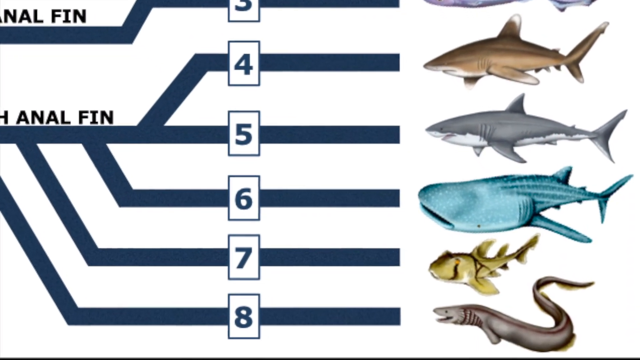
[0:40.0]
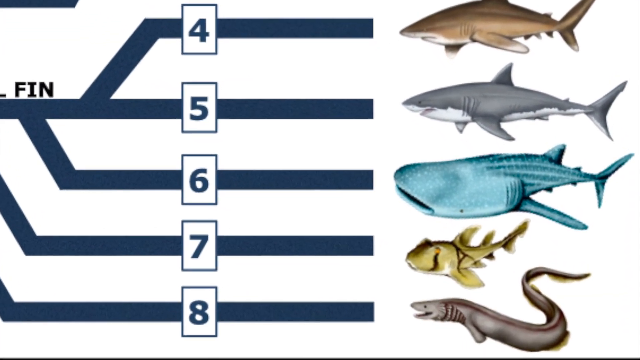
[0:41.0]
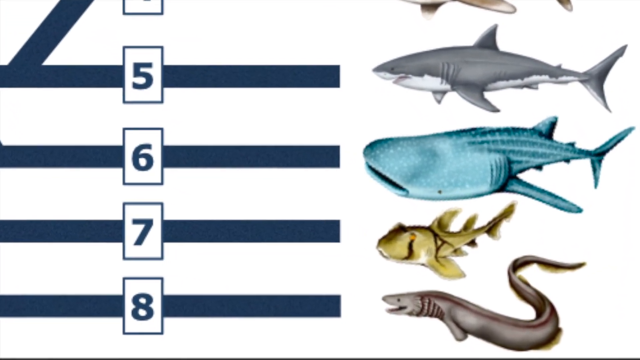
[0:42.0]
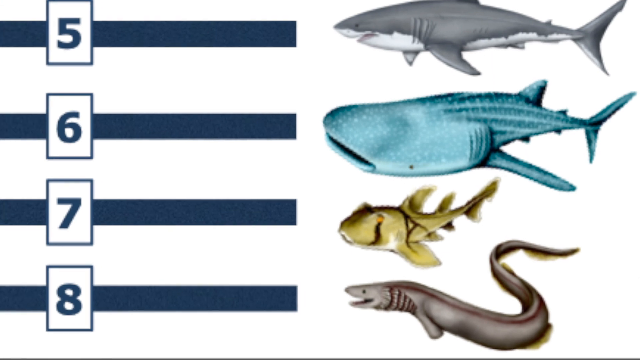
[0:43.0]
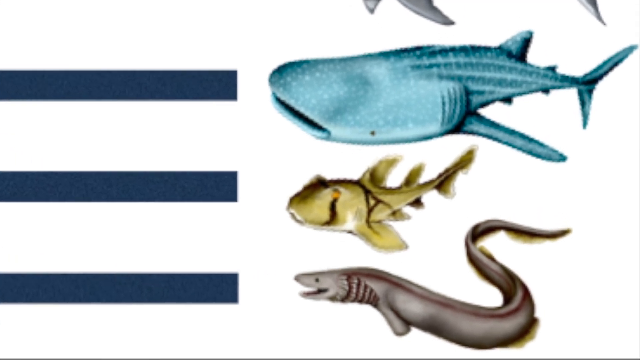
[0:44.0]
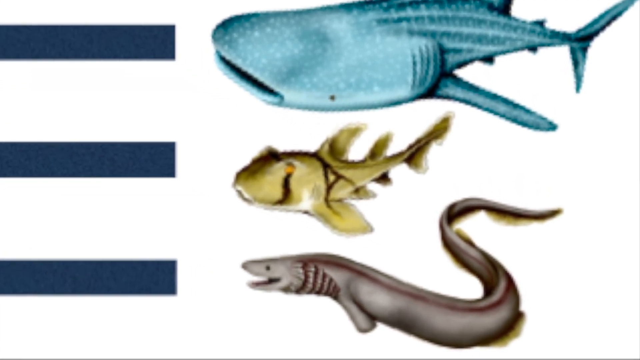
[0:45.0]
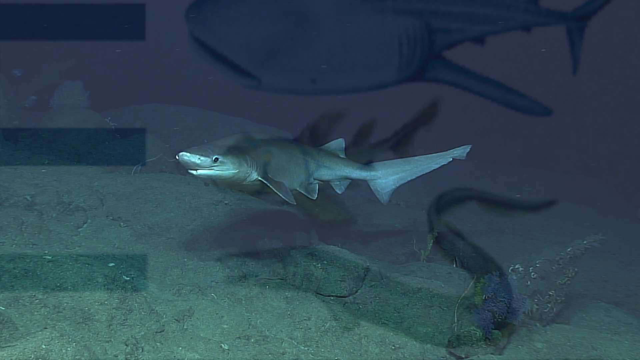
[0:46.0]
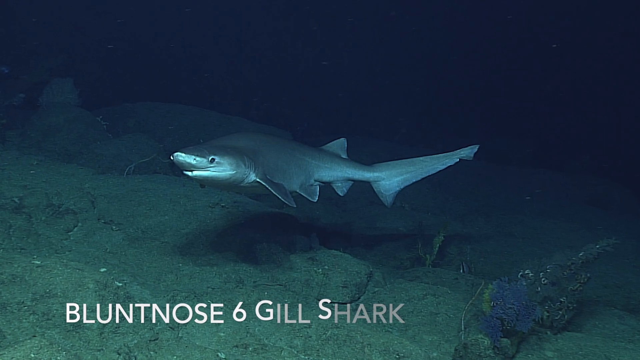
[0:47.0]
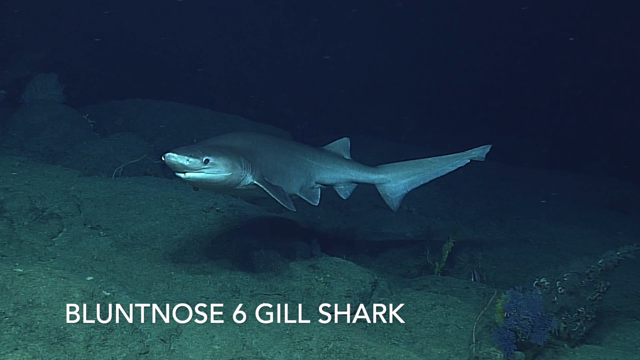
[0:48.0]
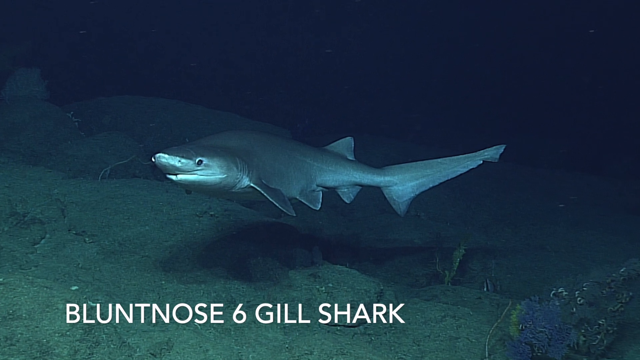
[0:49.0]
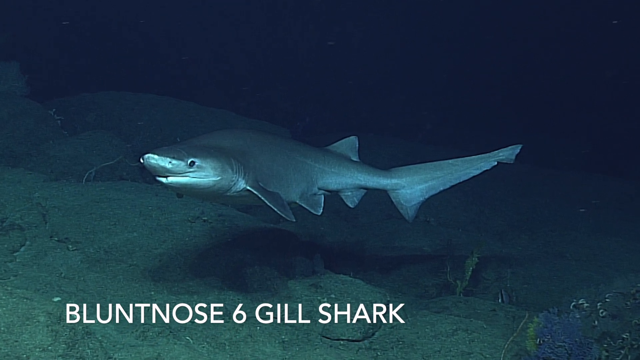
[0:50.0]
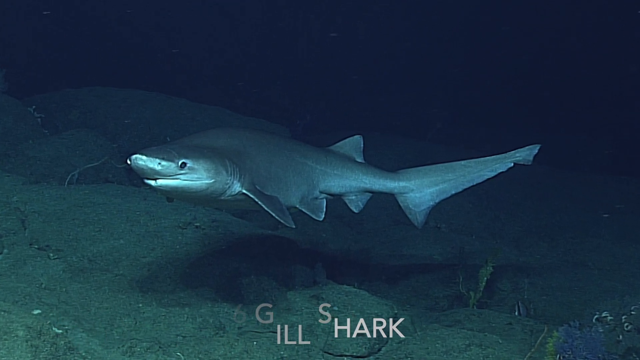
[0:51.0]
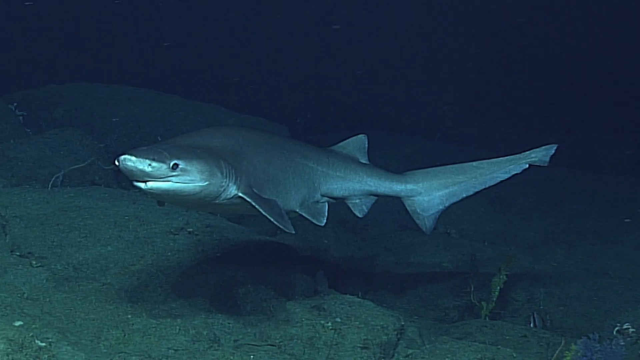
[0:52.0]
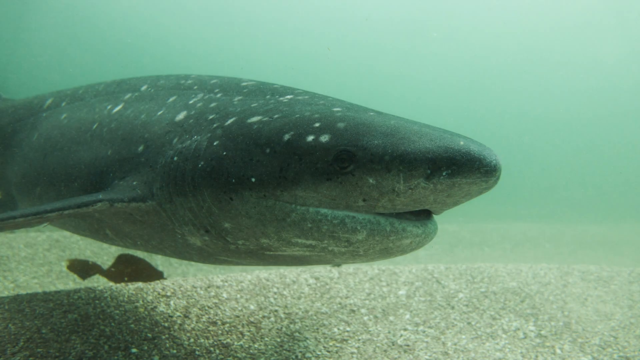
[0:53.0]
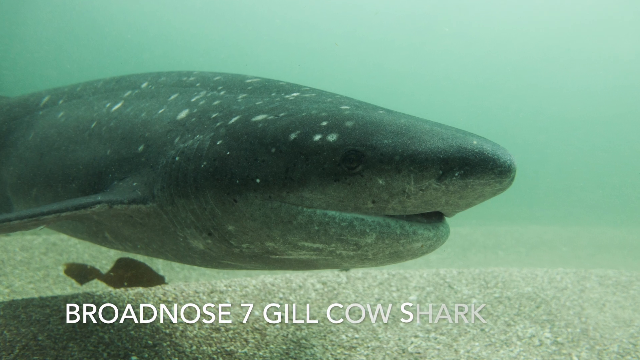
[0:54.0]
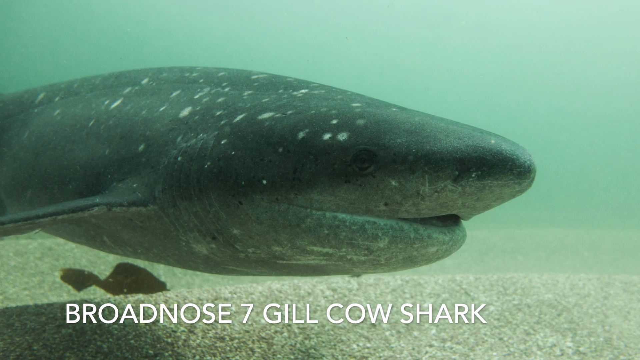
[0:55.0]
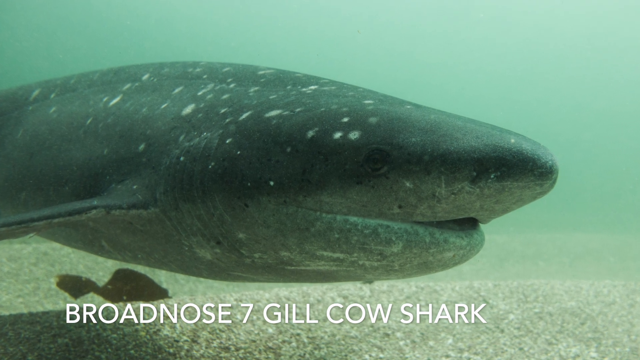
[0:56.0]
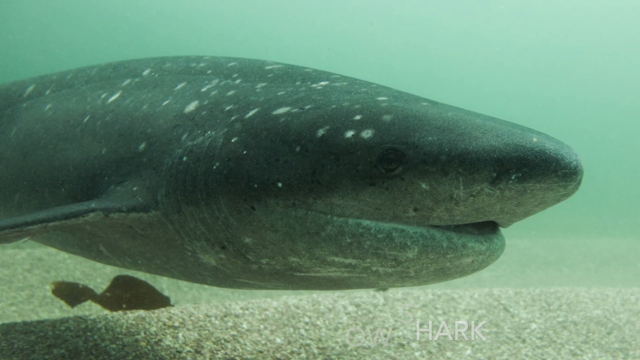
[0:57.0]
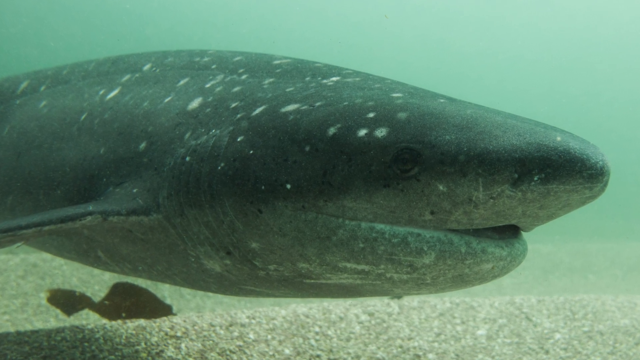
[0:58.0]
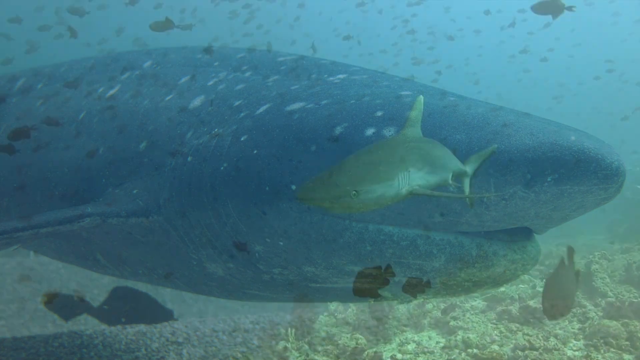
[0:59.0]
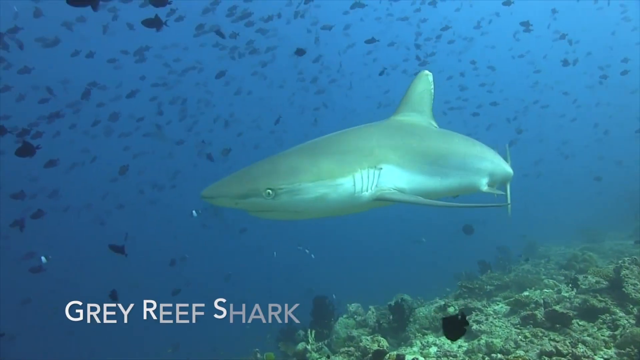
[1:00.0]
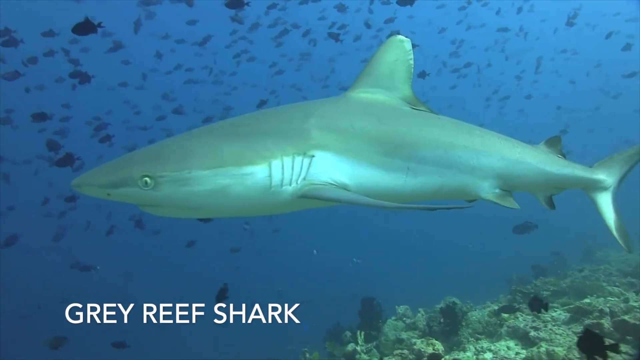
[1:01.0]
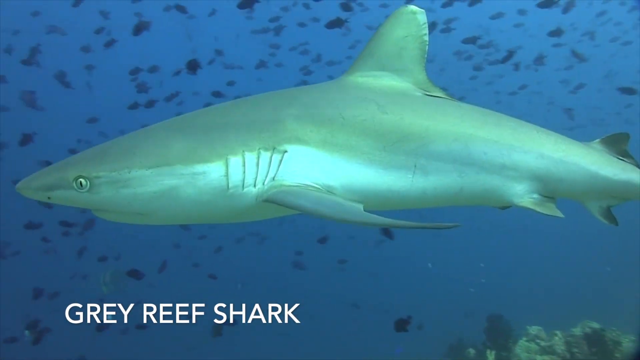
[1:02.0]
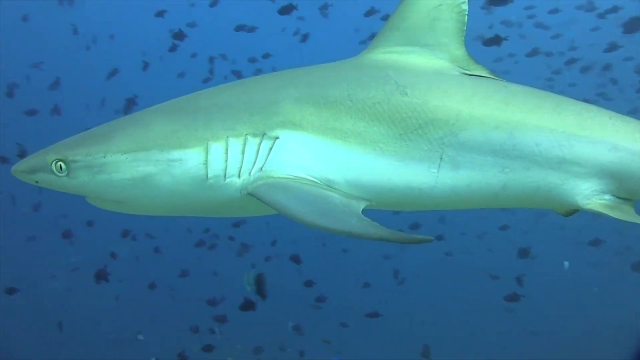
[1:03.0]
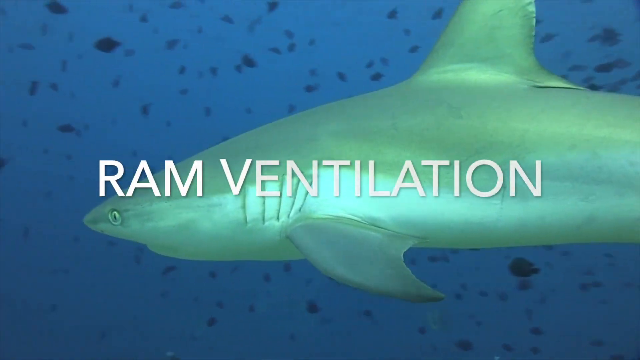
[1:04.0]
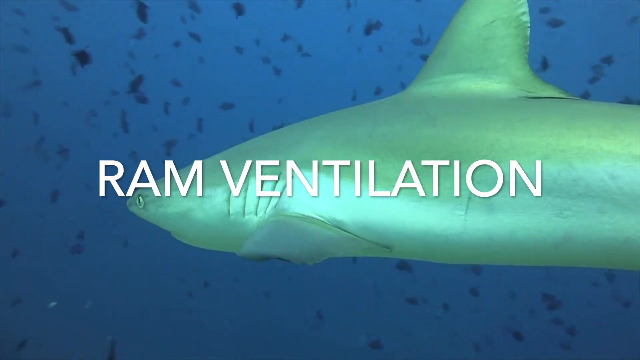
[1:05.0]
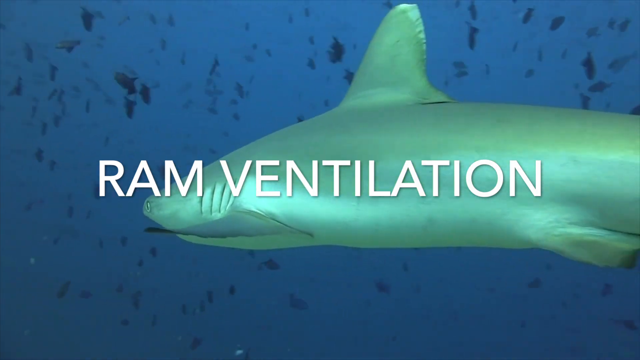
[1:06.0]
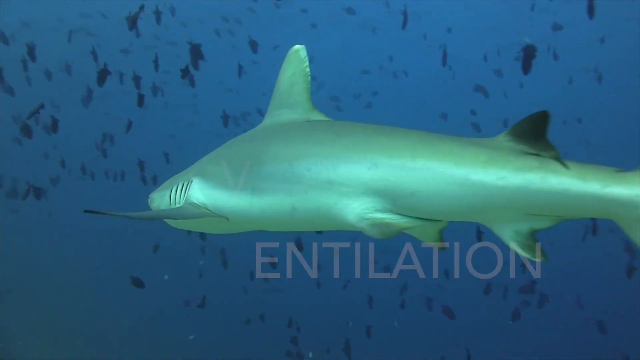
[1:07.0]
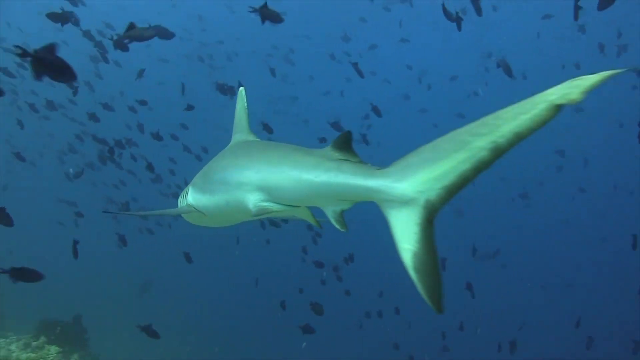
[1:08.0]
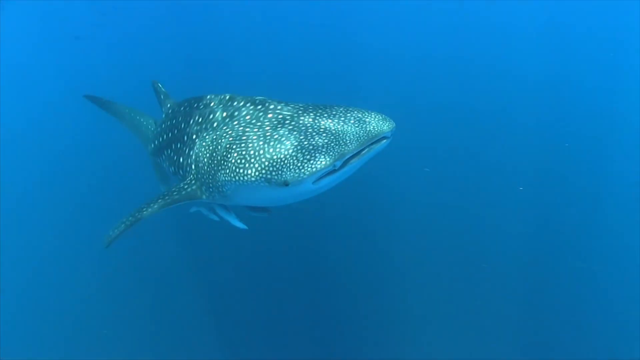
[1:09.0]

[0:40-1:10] Several sharks are shown in a numbered sequence starting from number 8. Number 8 is a shark underwater labeled as having a blunt nose and being a six gill shark. Number 7 has a broad nose and is a gill cow shark. Next is a grey reef shark, stated to have ram ventilation. The last one shown is a huge whale shark moving across the screen underwater from right to left. The sharks are in different colors and apparently different ages, some big and some small, and they differ in shape and body scale. Some are clearly visible in the water and some are not.